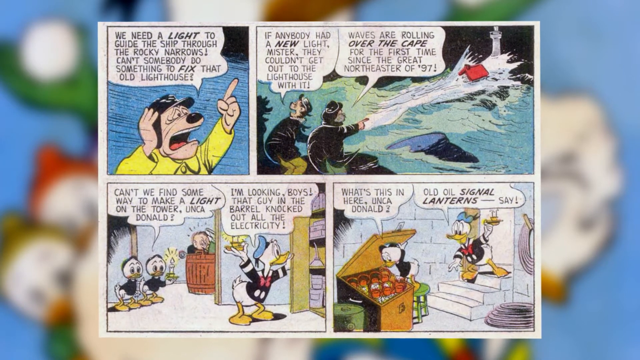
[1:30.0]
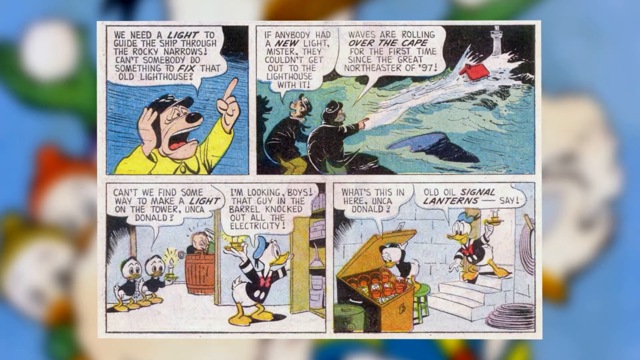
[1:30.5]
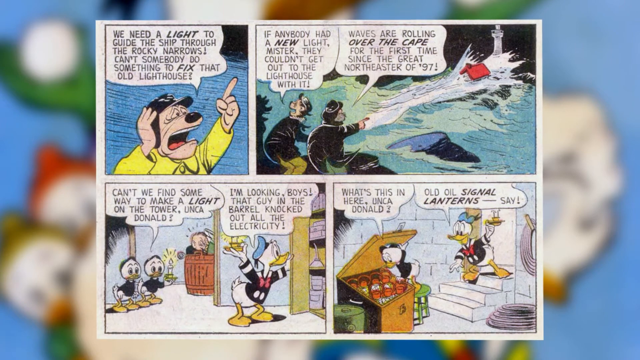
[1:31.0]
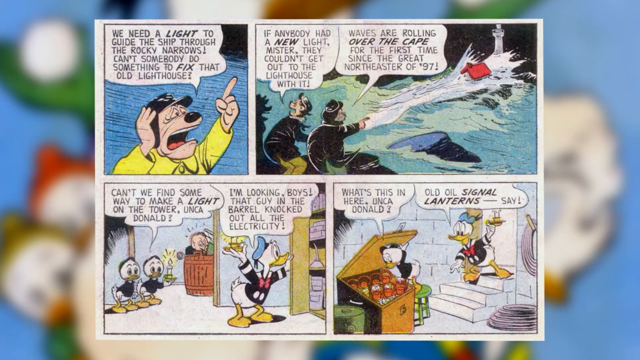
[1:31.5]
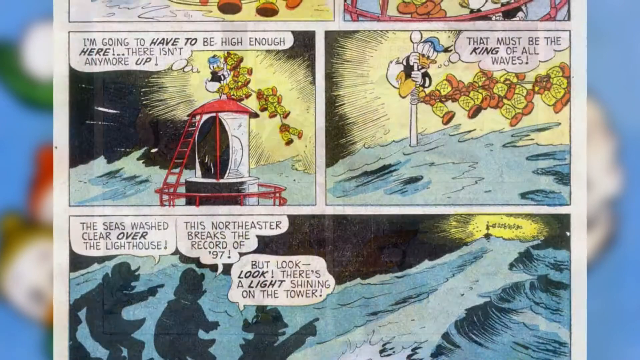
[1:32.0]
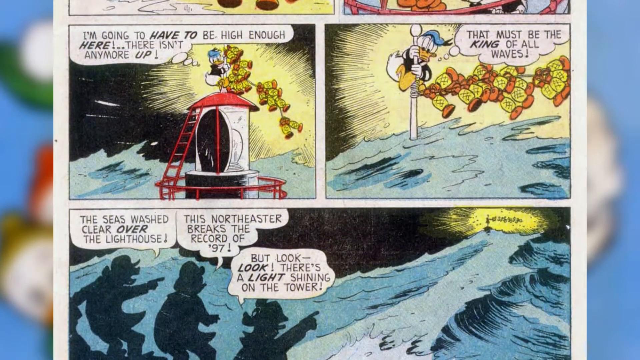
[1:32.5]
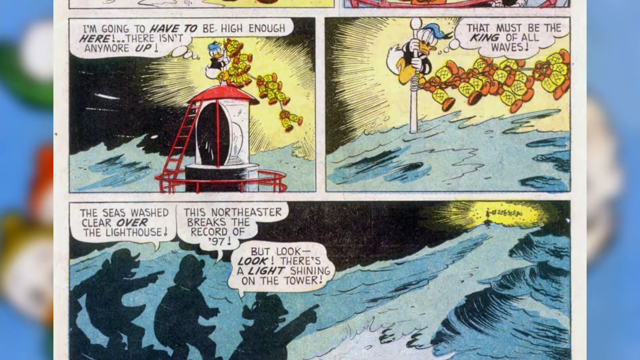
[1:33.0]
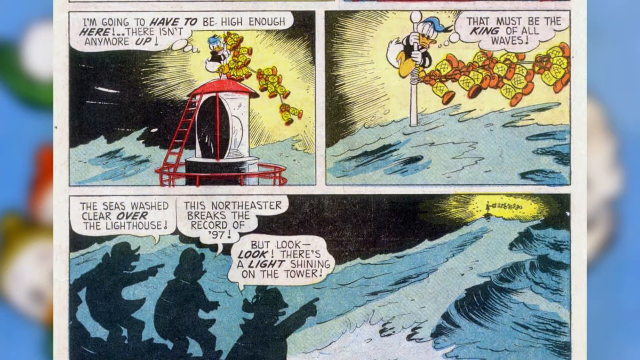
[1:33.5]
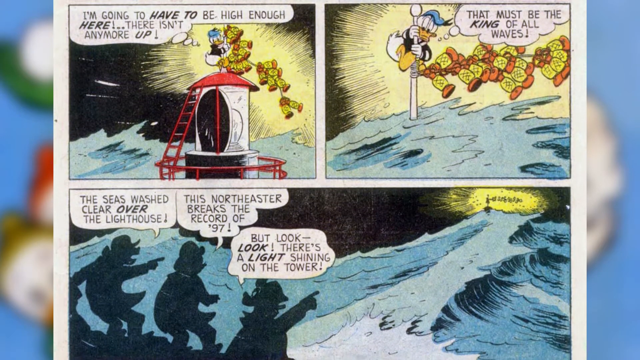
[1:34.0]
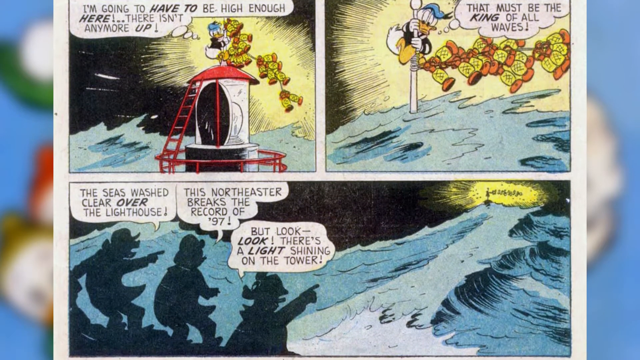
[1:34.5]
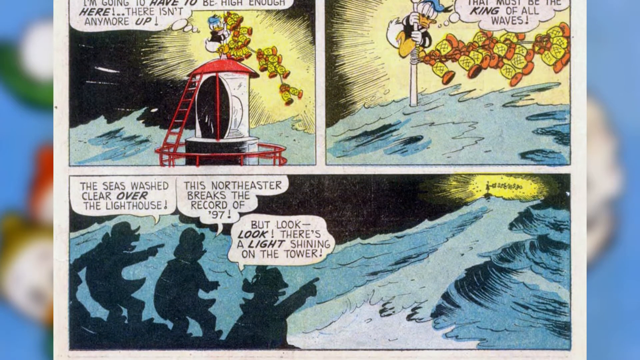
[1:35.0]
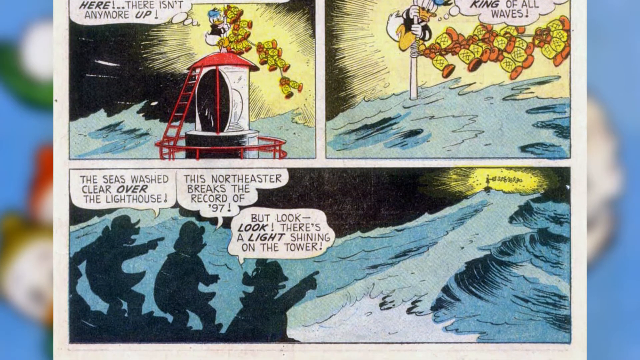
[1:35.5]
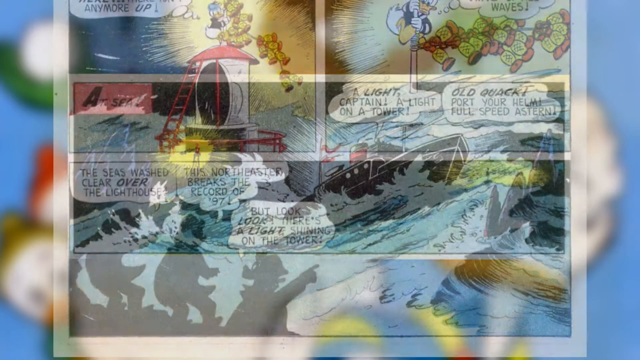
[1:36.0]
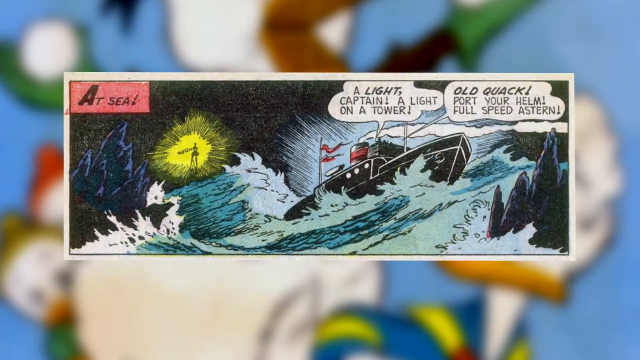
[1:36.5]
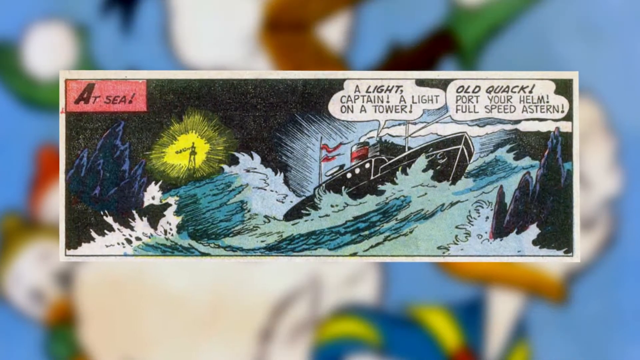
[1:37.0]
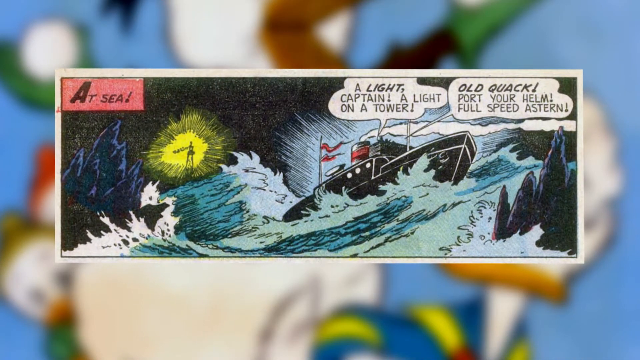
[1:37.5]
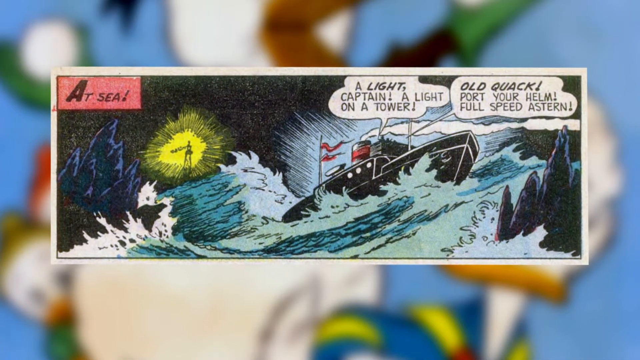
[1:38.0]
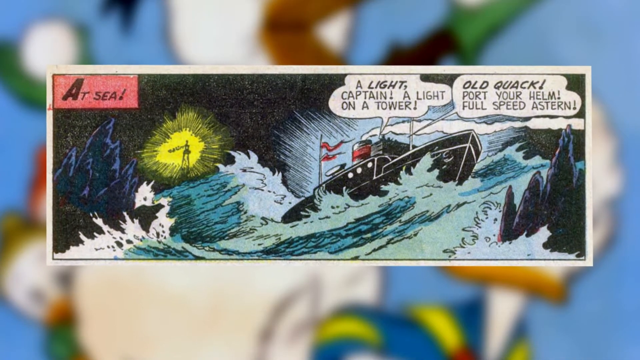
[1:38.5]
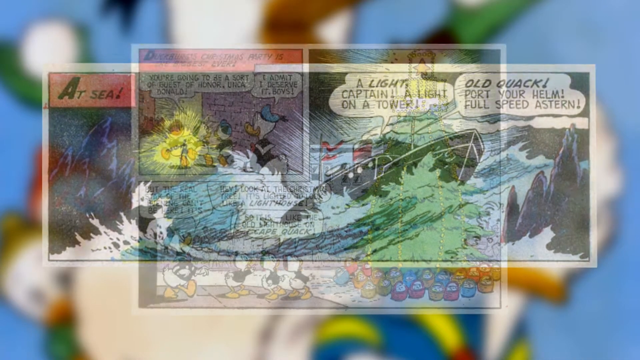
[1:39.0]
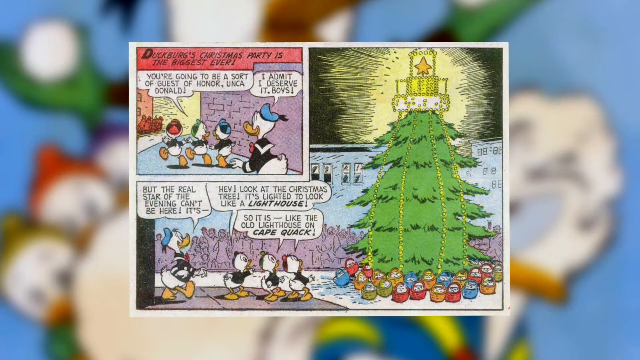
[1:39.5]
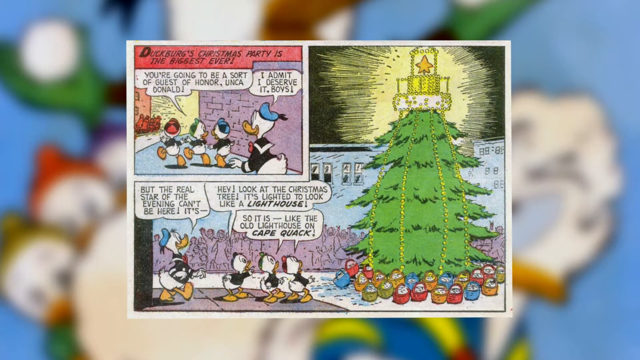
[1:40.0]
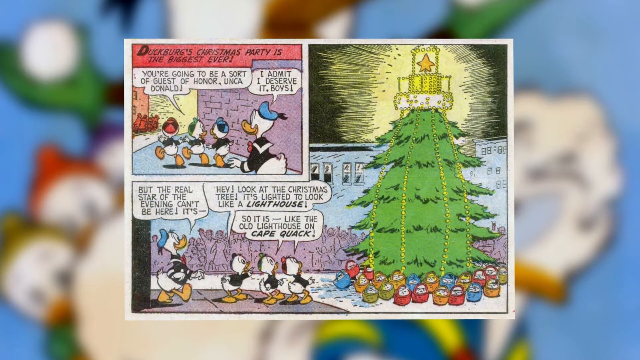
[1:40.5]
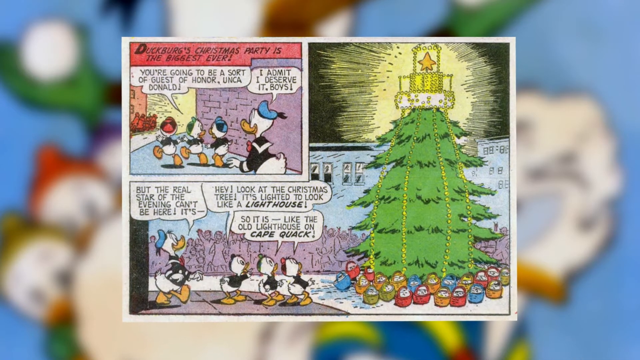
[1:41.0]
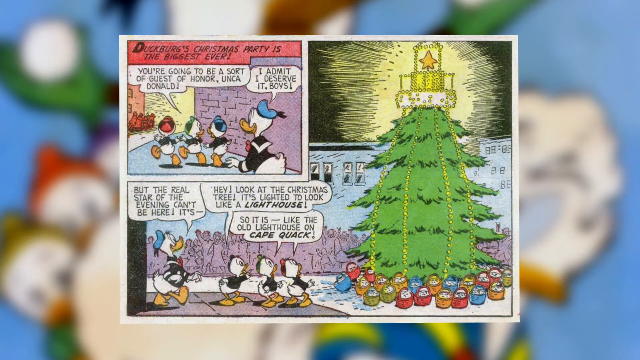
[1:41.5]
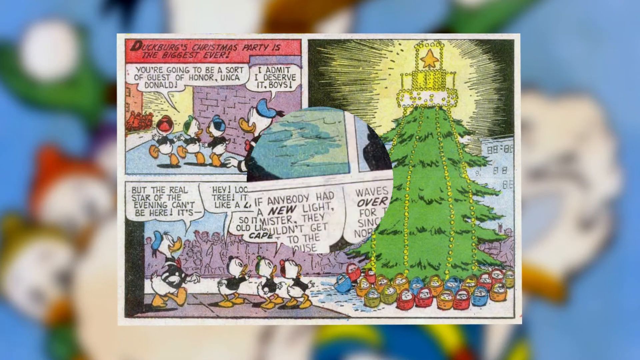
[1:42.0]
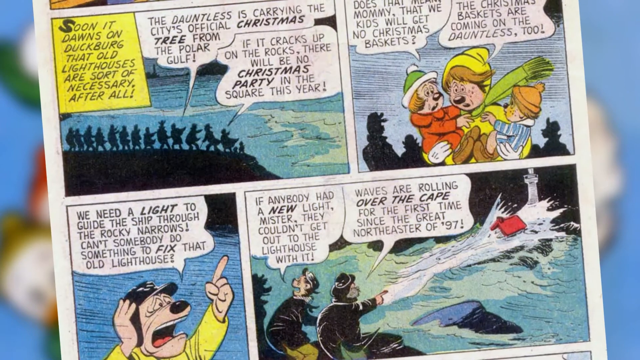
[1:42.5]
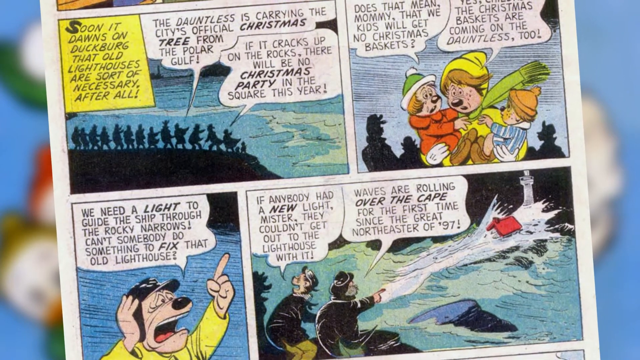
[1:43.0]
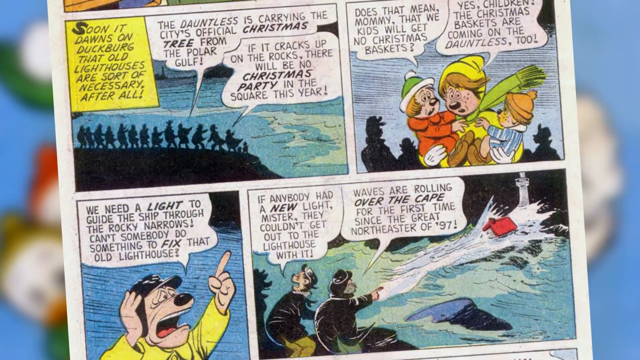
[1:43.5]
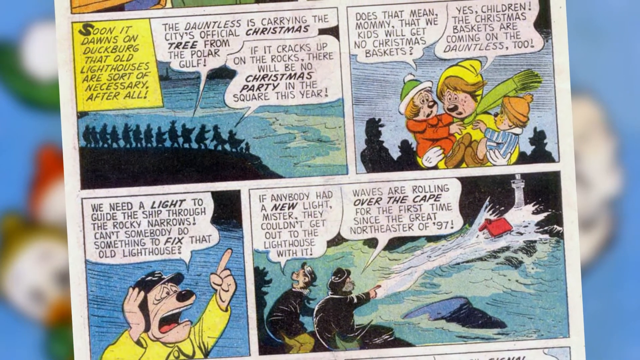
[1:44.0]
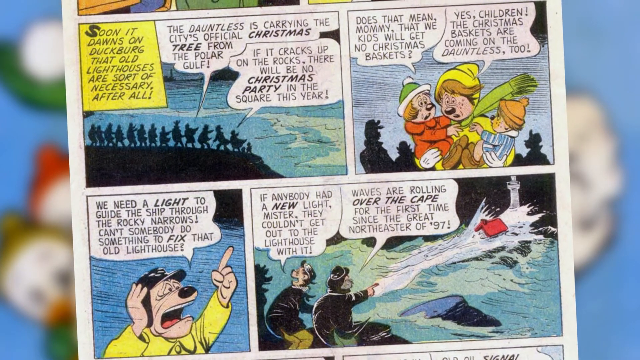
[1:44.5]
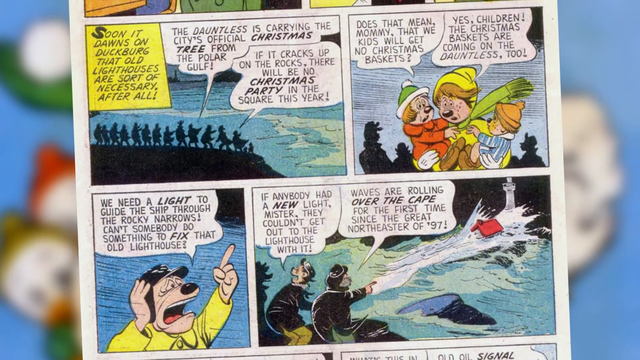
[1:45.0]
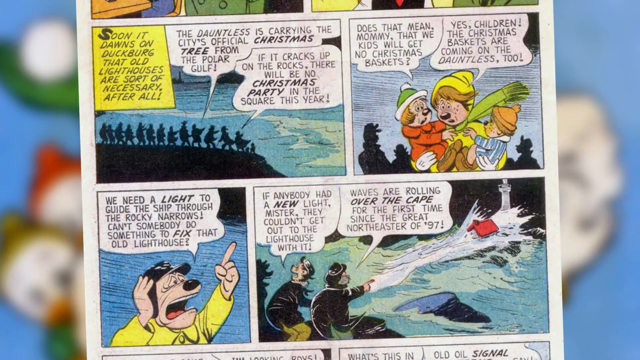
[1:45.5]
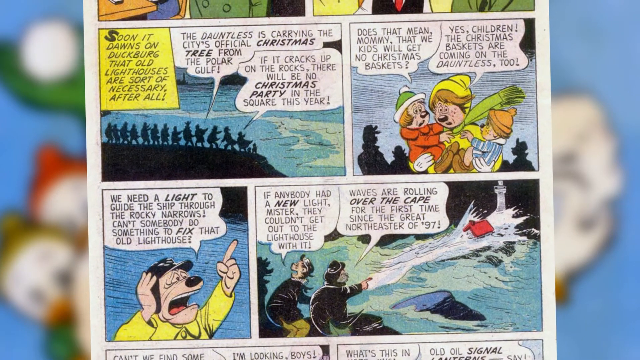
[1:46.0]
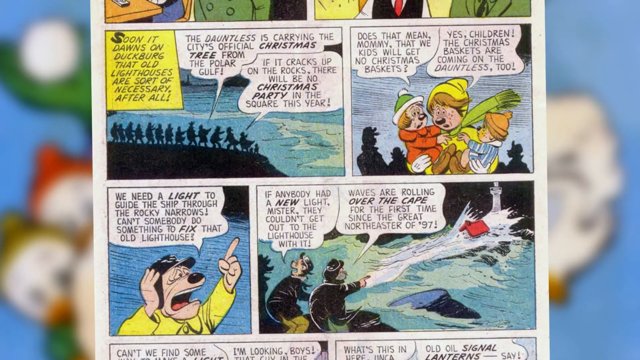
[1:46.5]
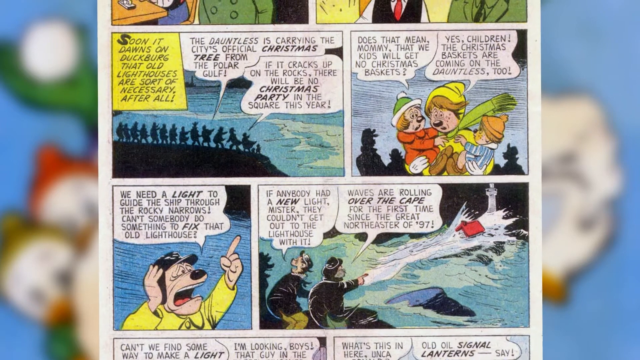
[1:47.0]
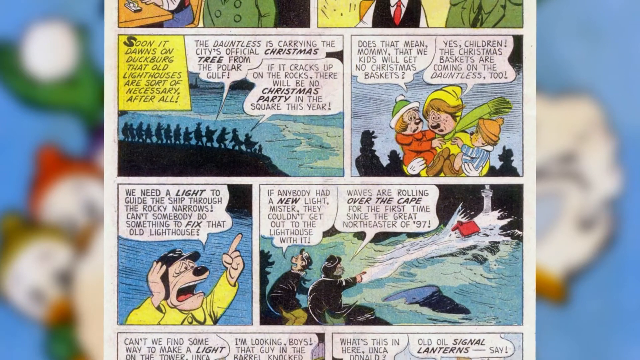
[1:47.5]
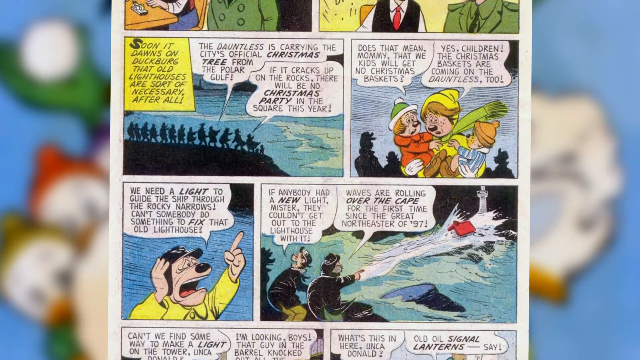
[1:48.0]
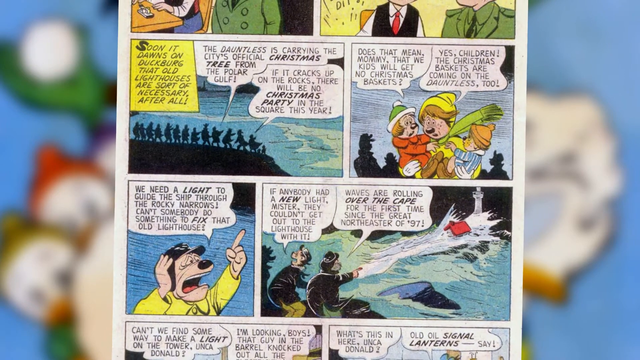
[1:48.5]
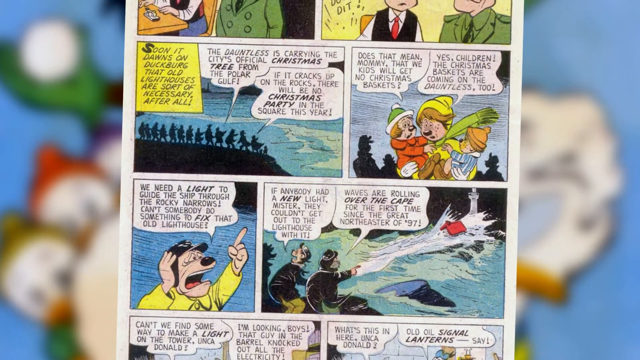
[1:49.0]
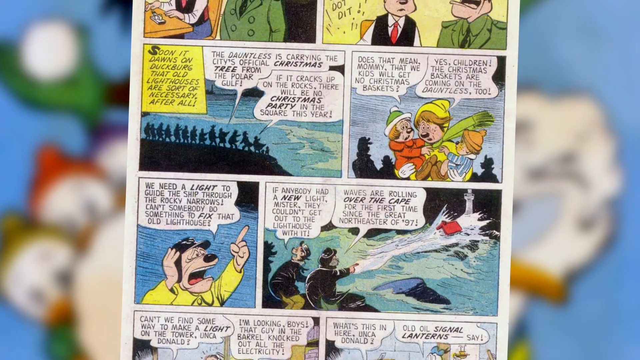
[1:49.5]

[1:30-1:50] A ship that seems to be lost is having trouble navigating through the storm, and those aboard seem to be looking toward the lighthouse, which is not lit because it needs a new light. Inside the lighthouse, Daffy Duck and the three little ducks search for something like oil to light the light, since all the electricity is knocked out. They seem to find some type of lanterns, many of them connected on a string, and Daffy Duck climbs to the very top of the lighthouse carrying all the lit lanterns, which cause a bright light in the sky so that the people on the lost ship can see the light shining on top of the lighthouse tower and make their way toward it. With the ship saved, Daffy Duck and the three little ducks seem to be treated as guests of honor at some type of Christmas party.